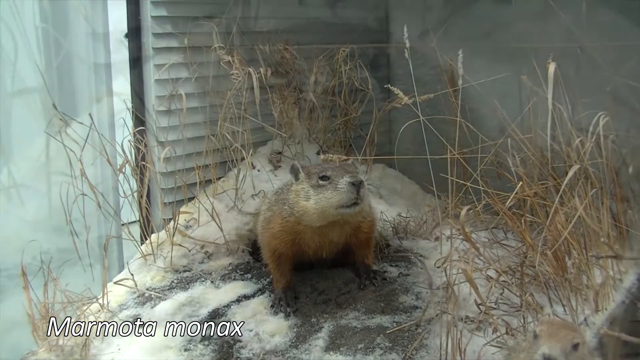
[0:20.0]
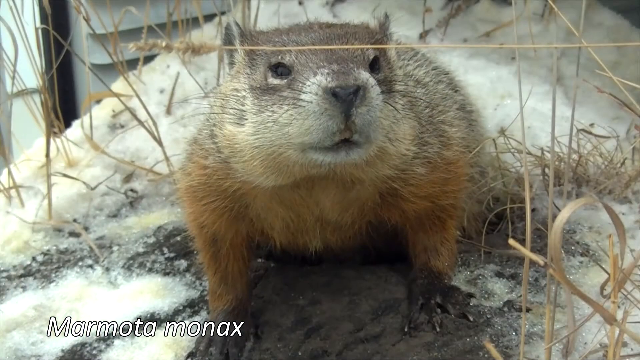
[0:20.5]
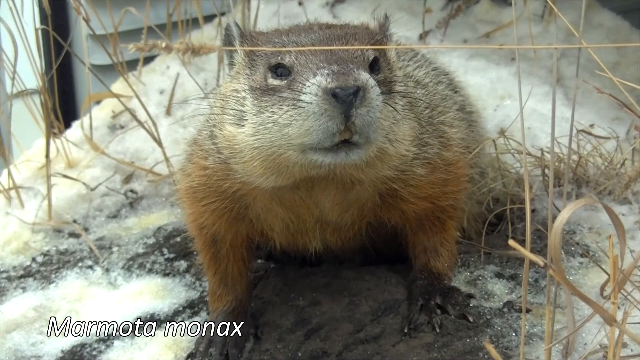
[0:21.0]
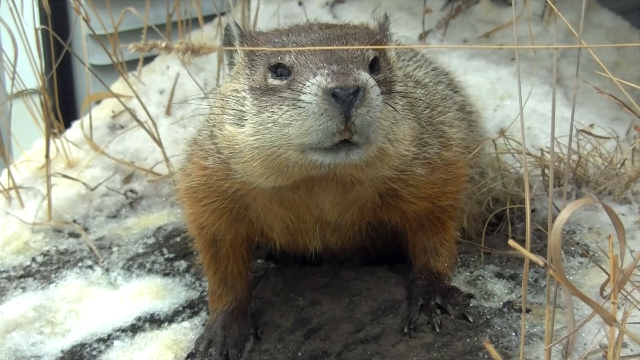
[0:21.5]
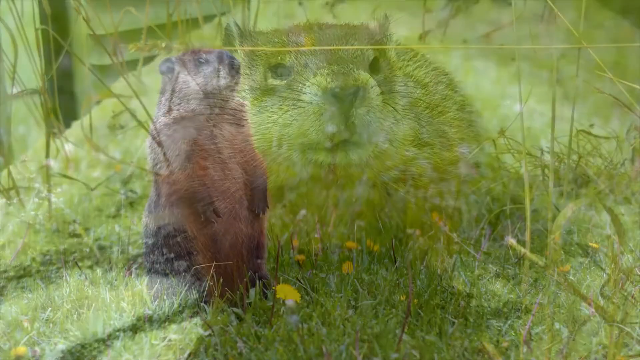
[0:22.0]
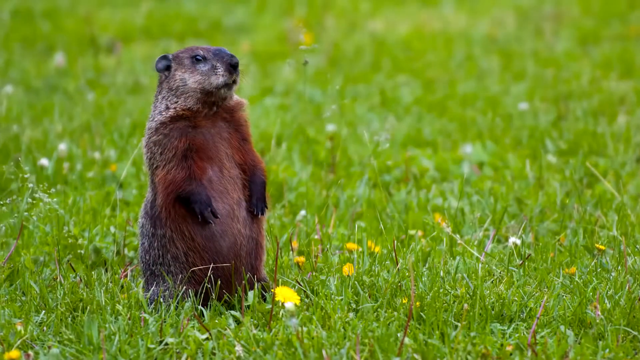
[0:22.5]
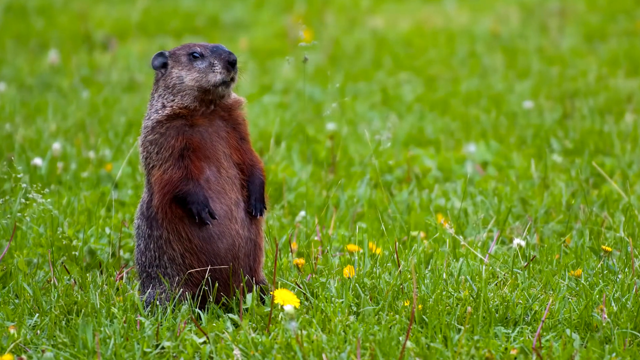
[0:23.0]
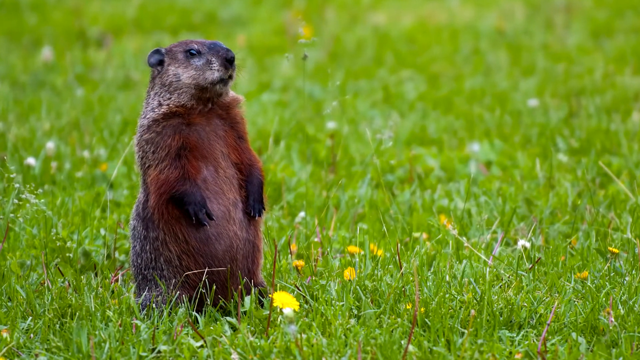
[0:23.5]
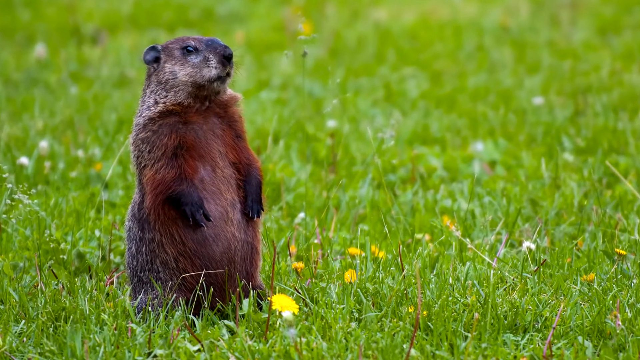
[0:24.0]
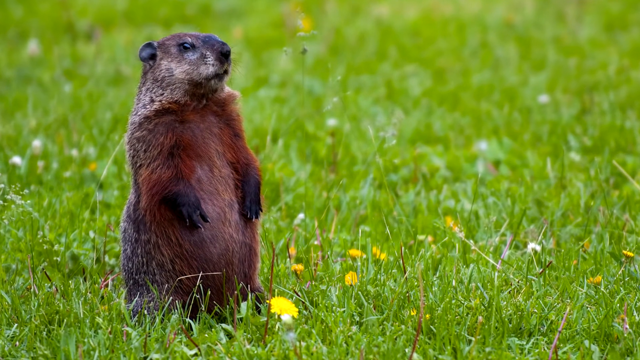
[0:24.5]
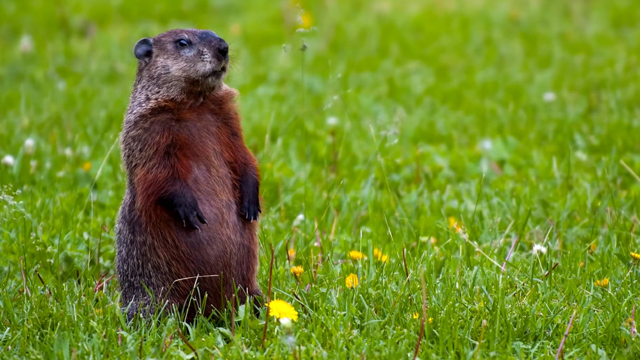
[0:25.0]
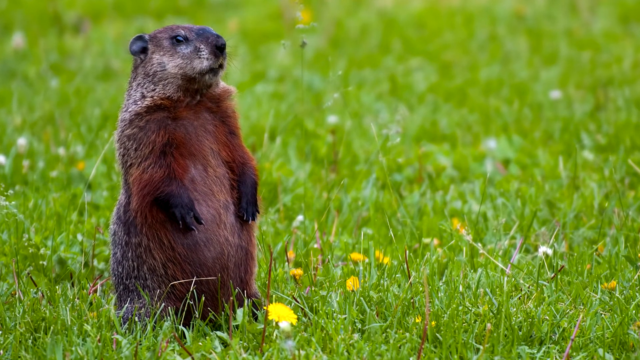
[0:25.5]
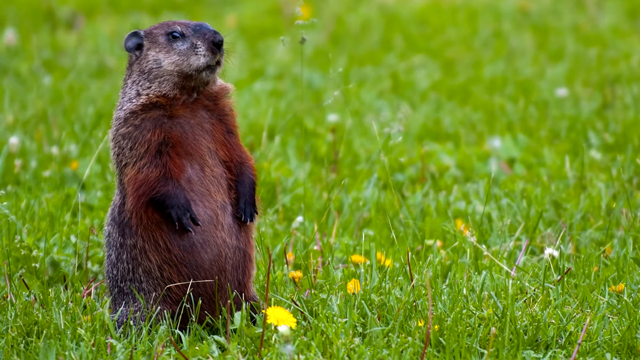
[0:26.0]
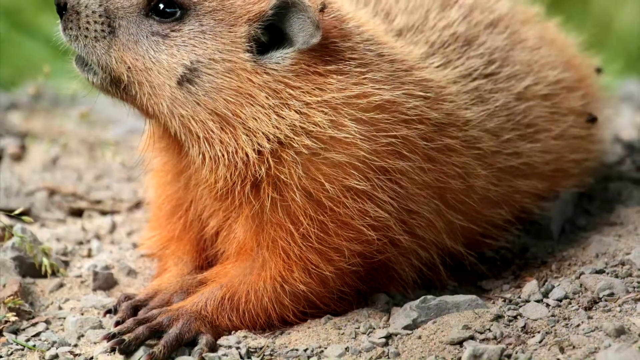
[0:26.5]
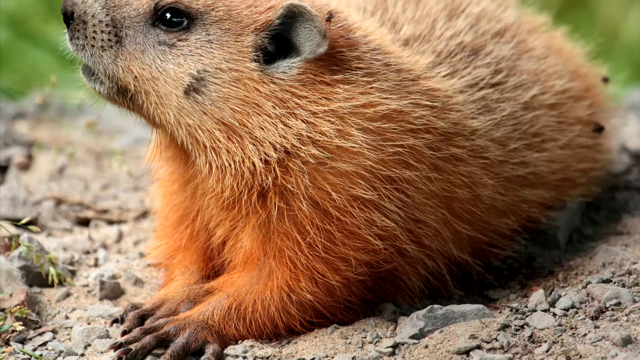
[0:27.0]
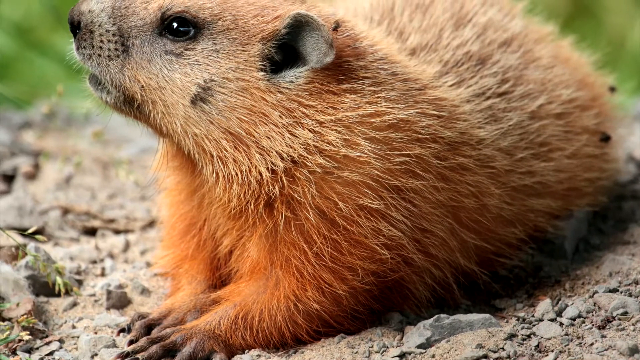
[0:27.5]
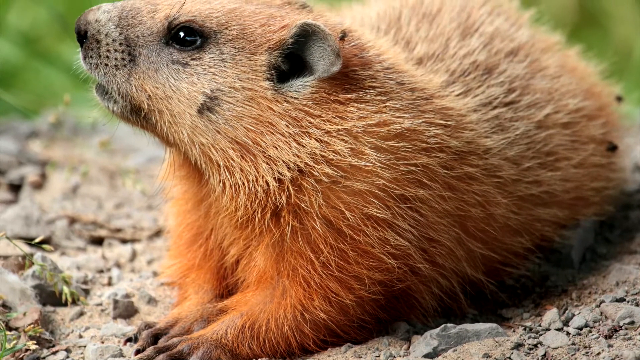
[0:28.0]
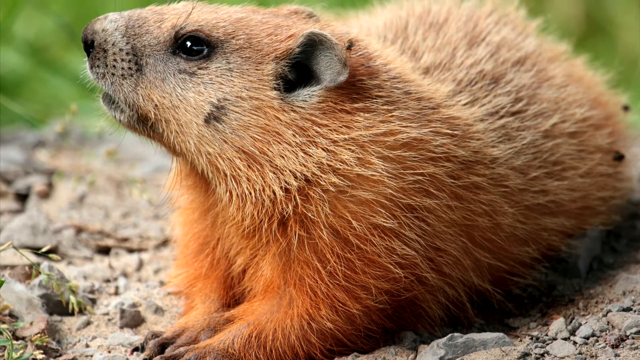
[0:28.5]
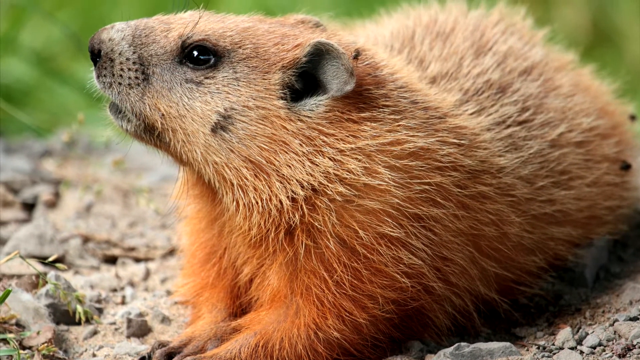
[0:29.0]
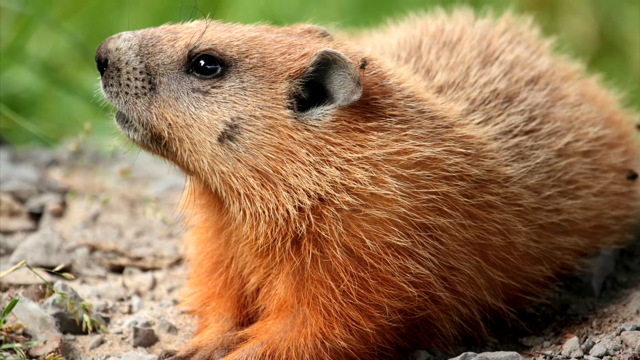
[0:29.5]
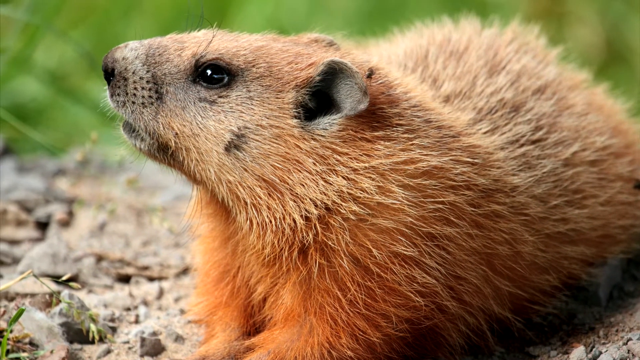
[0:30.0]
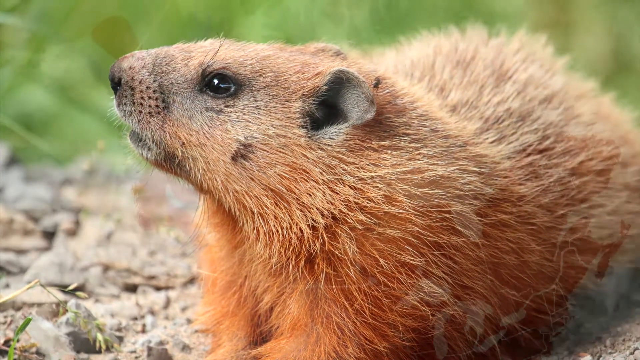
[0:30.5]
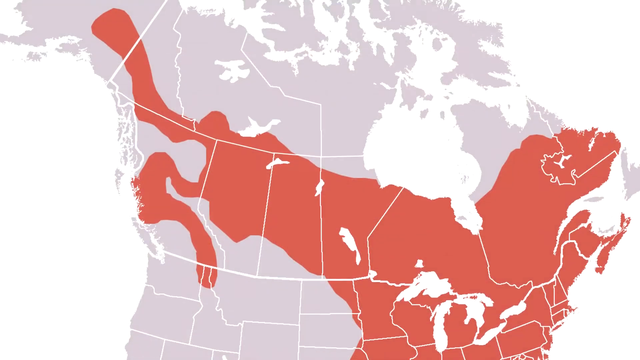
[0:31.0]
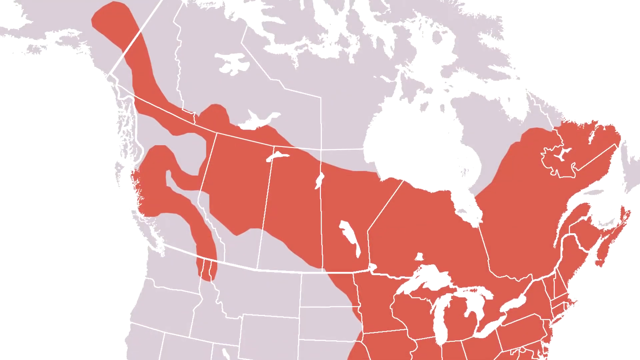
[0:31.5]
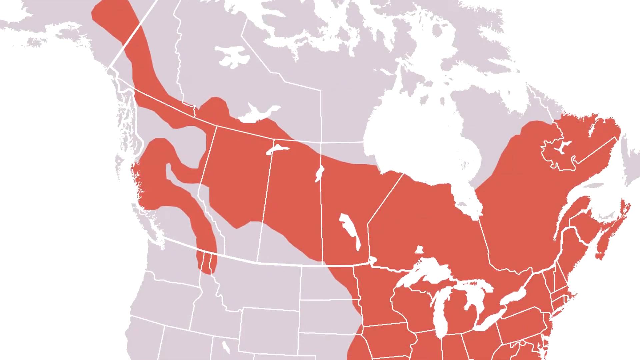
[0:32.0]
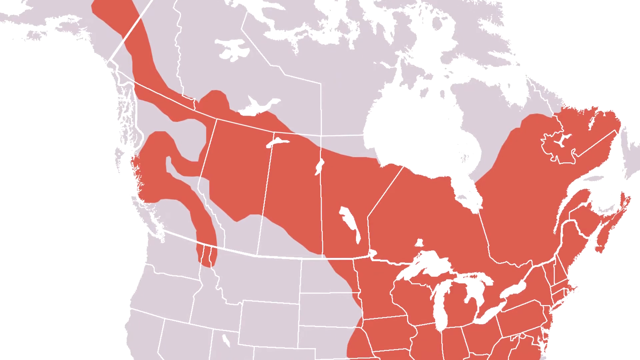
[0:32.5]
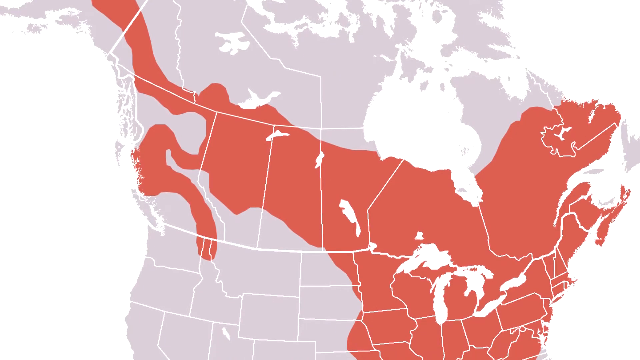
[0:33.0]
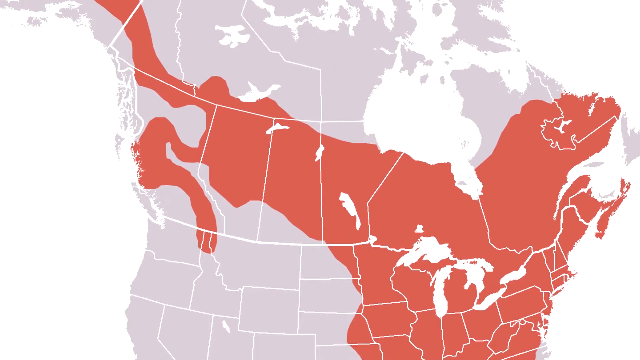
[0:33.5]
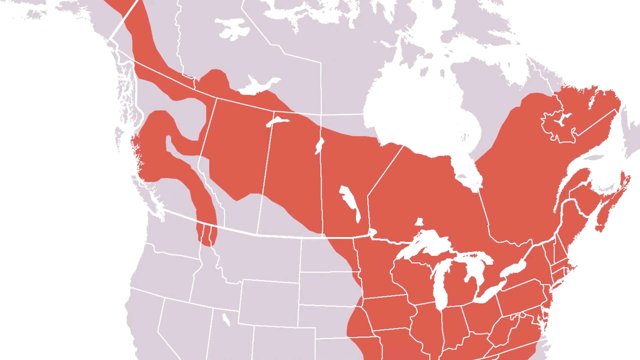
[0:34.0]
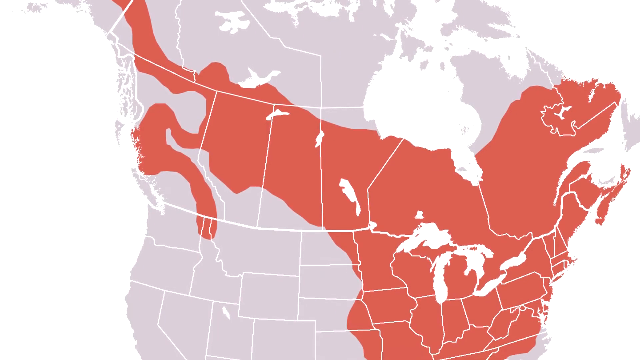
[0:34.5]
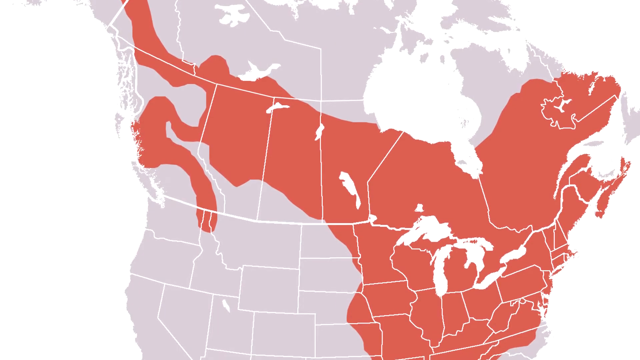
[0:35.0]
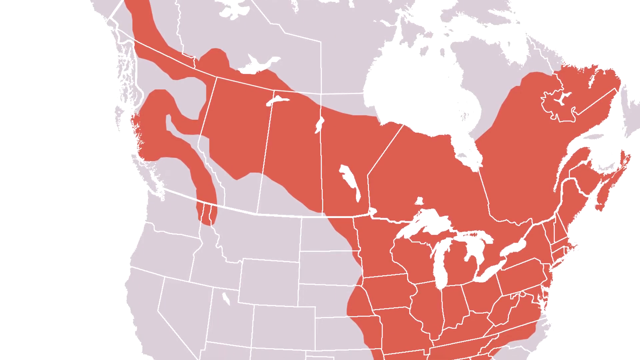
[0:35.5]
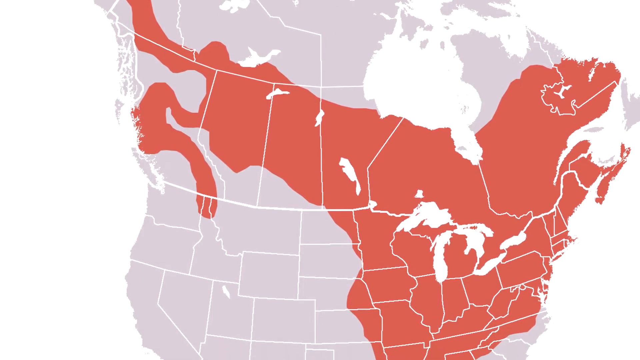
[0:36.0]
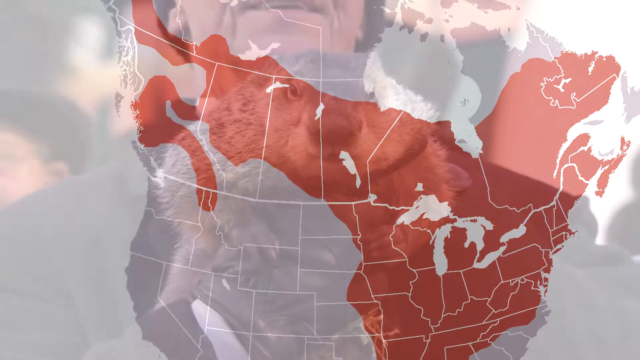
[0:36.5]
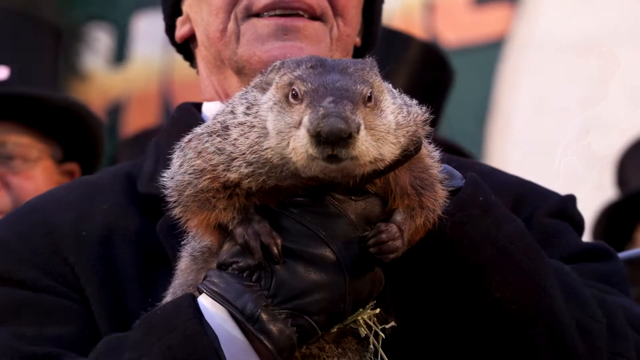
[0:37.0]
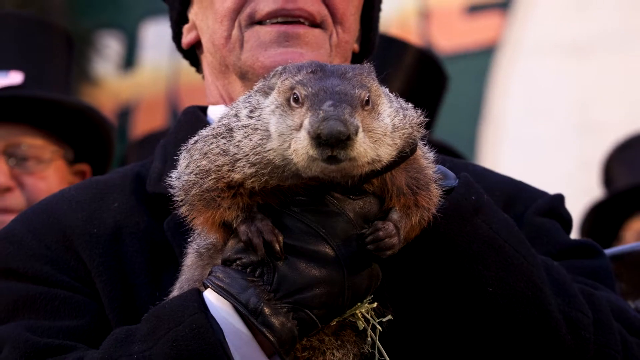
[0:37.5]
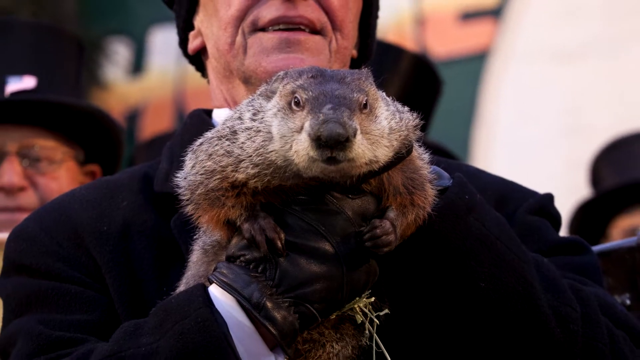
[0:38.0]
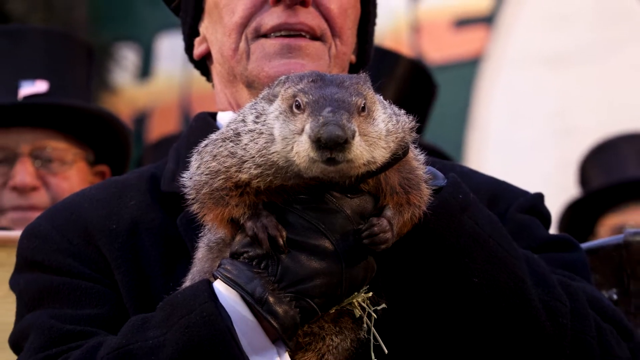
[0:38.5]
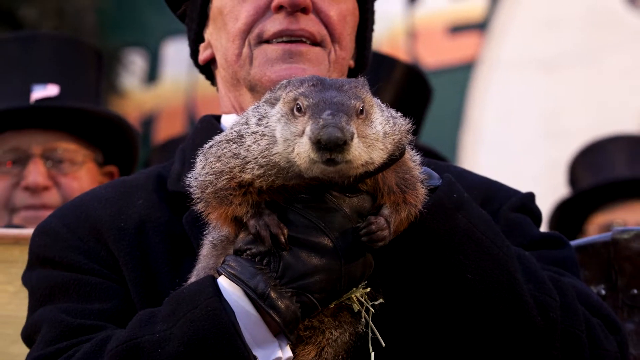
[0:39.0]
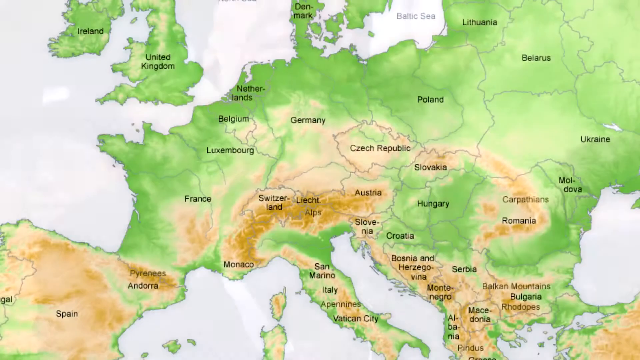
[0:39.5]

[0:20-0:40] The light brownish-red creature, which looks very much like a gopher or a woodchuck, is seen from behind glass, and the view moves in for a close-up of its face as it faces slightly to the right of the camera. The view shifts to a field with dandelions and shorter grass, where the creature now stands. Its fur is a more pronounced reddish color, and its paws, clasped in front, have dark brown, almost black claws. The animal looks off to the right of the screen, almost in profile but facing slightly toward the camera, with its body positioned slightly to the left. The camera slowly moves closer. The grass is short, with some white flowers among it. The view changes to a profile of the animal's left side; its fur is now a more reddish, slightly red-golden color, and it is on the ground pointing its nose to the upper left. A habitat map follows, covering almost all of Canada into Alaska, the Midwest of the United States, and east to the Atlantic coast into the Newfoundland and New Brunswick area. The map scrolls slowly to the right and then pans down, showing the range extending down into Georgia in the U.S. and, further west, apparently almost into Texas. The animal is a groundhog: Puxatawney Phil is then shown held by his handler, with at least three or four men in top hats in the background. The handler grips Phil firmly with his left hand in front and his right hand behind, and Phil faces directly toward the camera while the man smiles. A map of Europe with lots of green then appears.